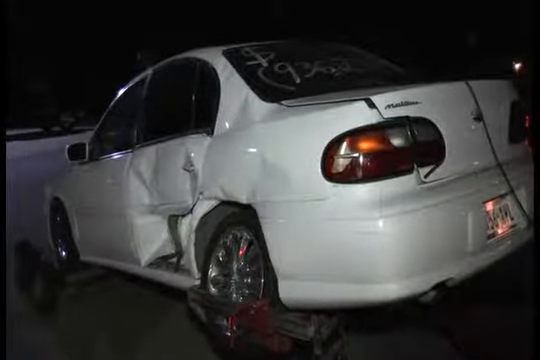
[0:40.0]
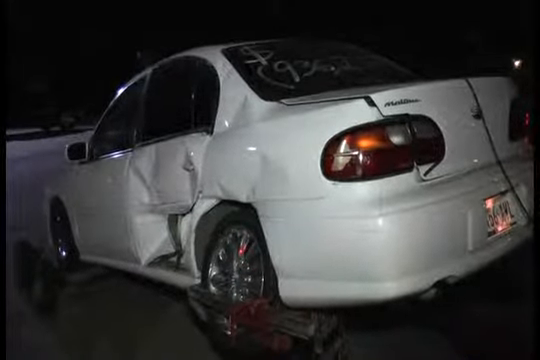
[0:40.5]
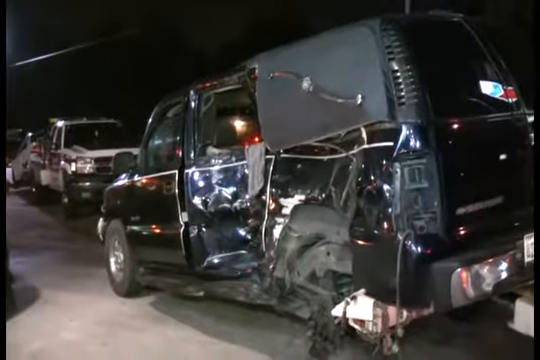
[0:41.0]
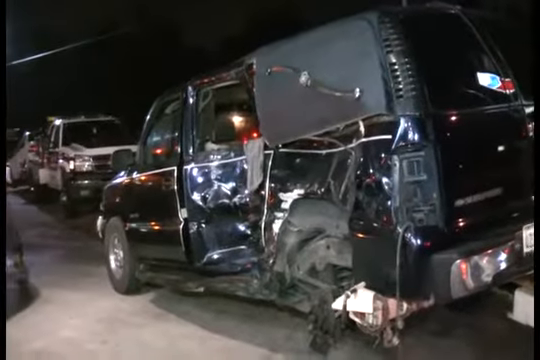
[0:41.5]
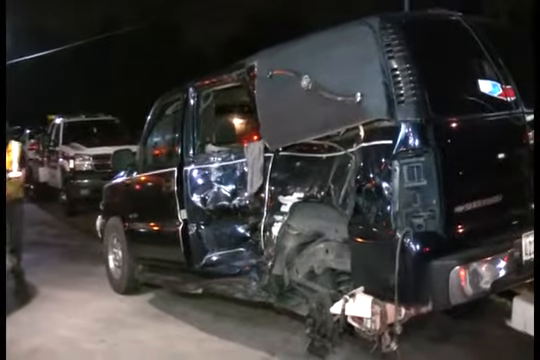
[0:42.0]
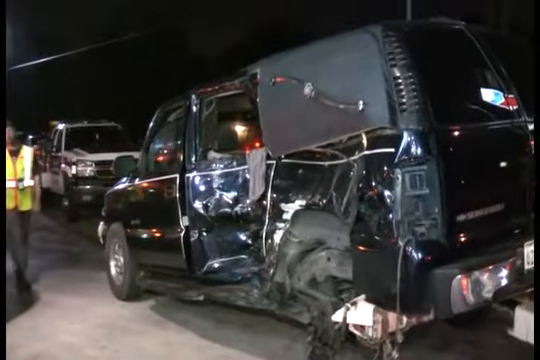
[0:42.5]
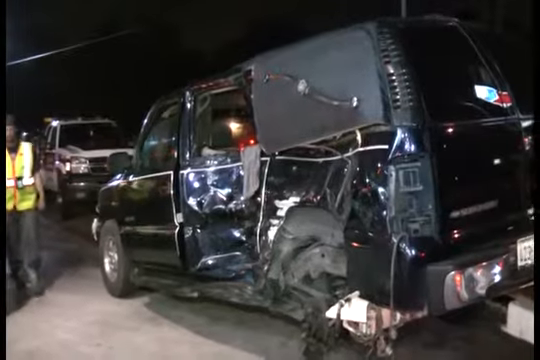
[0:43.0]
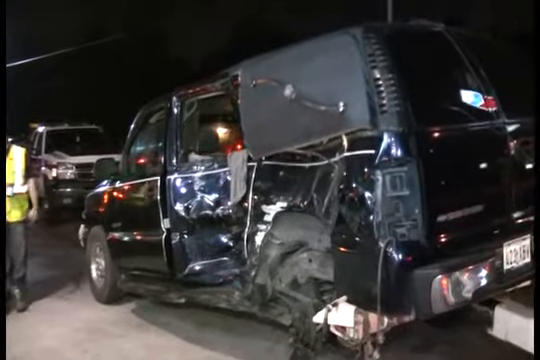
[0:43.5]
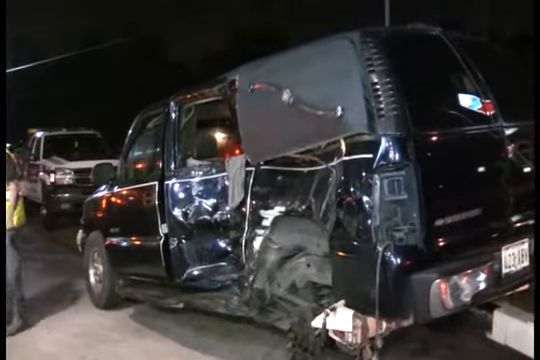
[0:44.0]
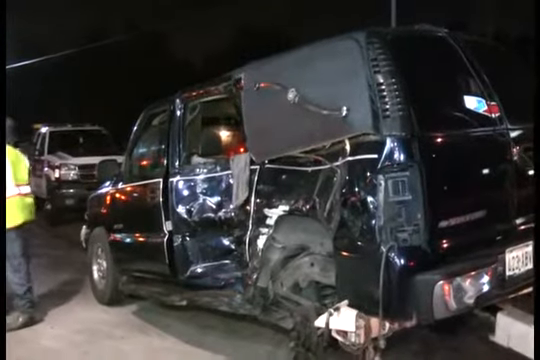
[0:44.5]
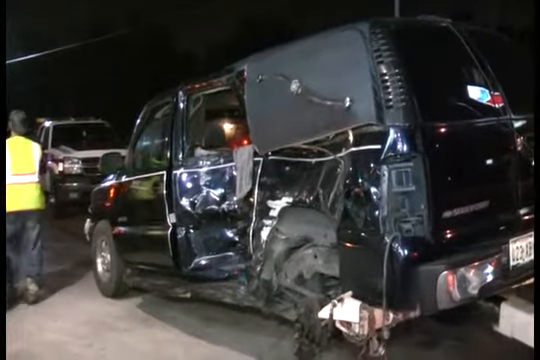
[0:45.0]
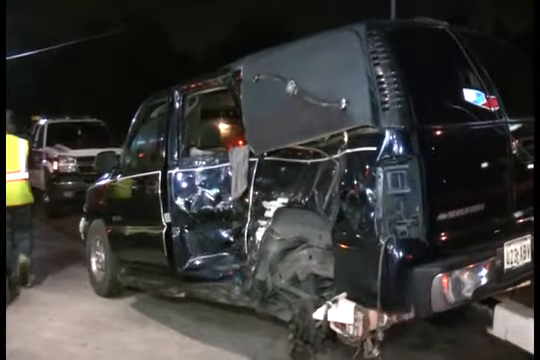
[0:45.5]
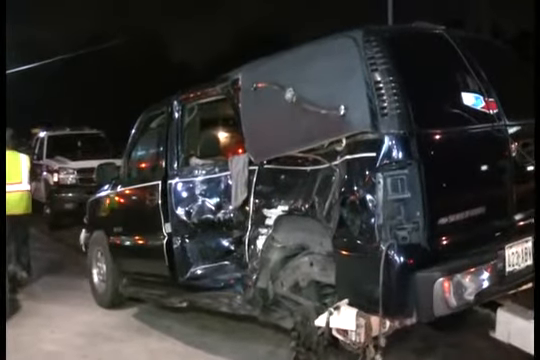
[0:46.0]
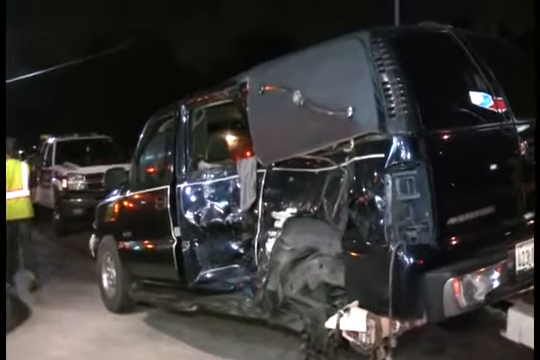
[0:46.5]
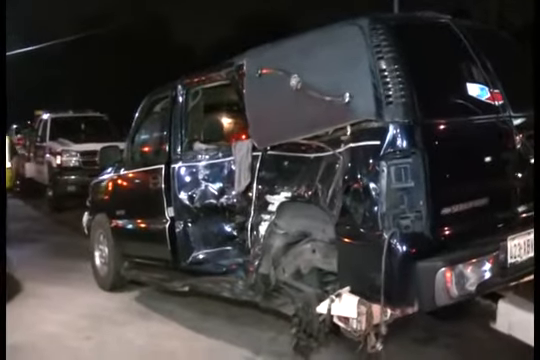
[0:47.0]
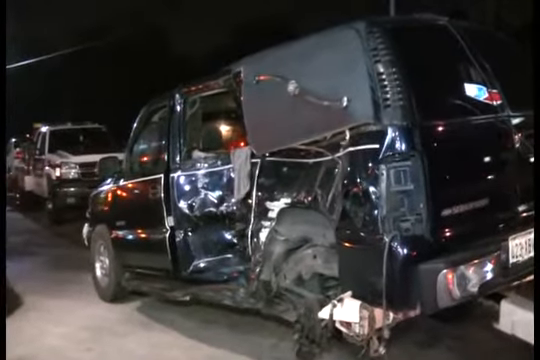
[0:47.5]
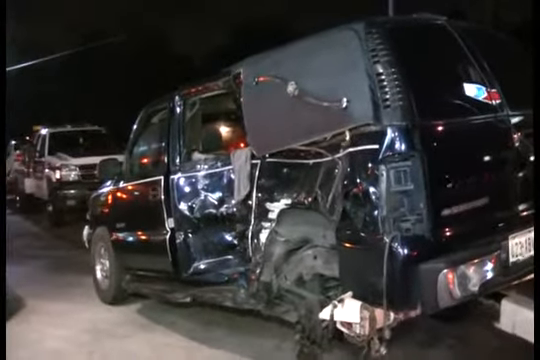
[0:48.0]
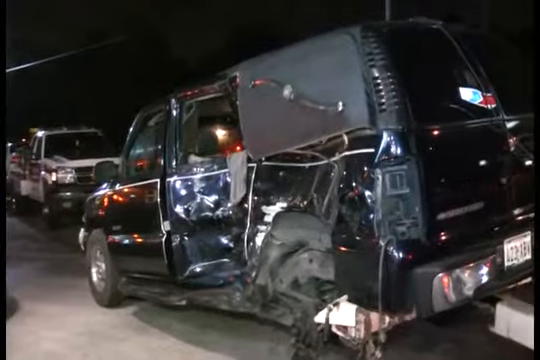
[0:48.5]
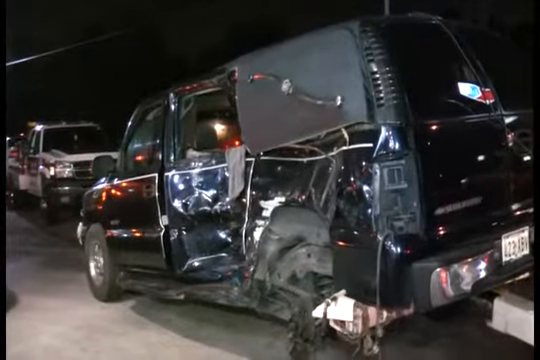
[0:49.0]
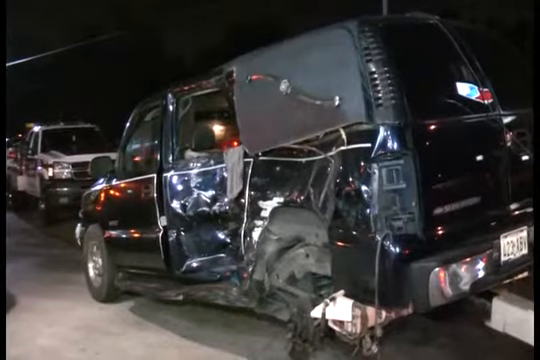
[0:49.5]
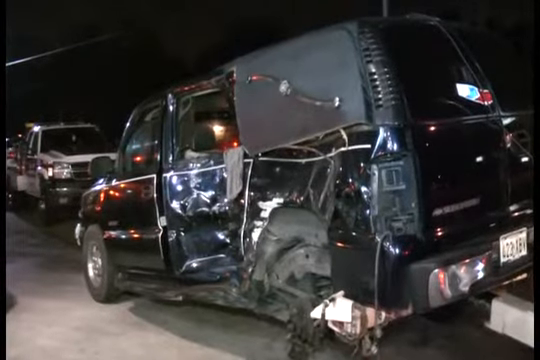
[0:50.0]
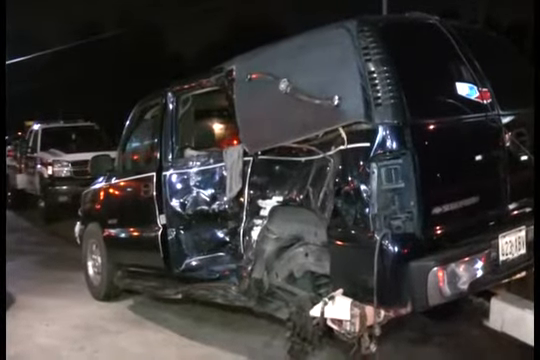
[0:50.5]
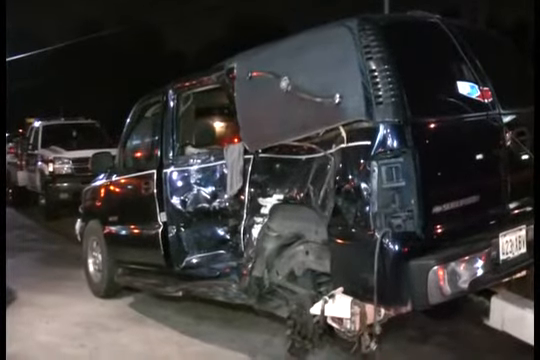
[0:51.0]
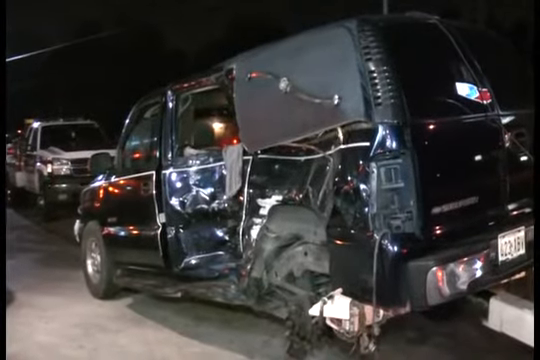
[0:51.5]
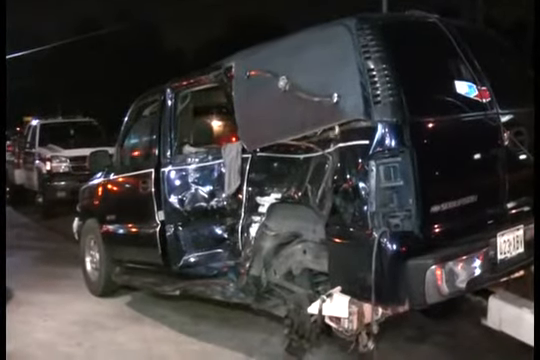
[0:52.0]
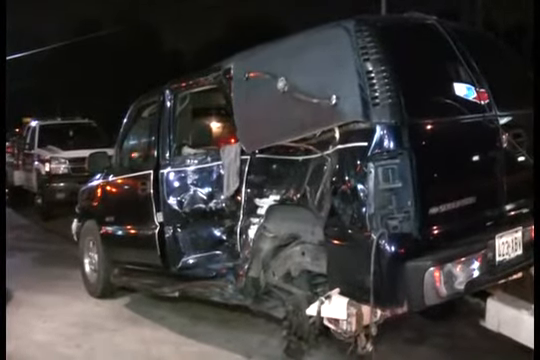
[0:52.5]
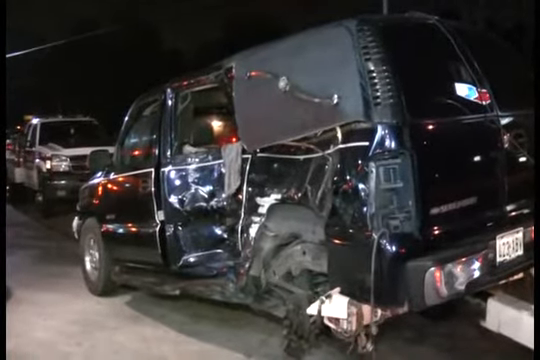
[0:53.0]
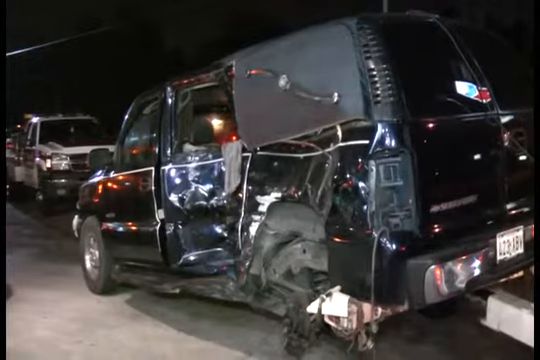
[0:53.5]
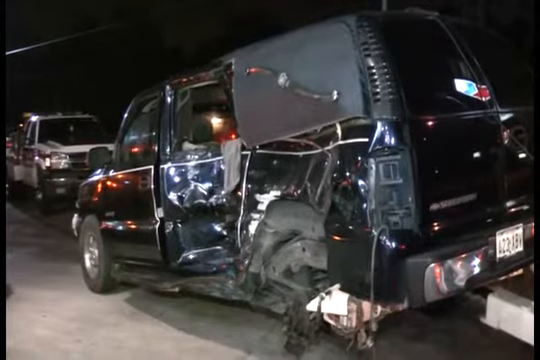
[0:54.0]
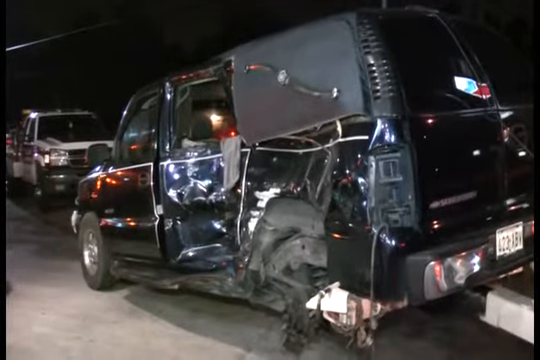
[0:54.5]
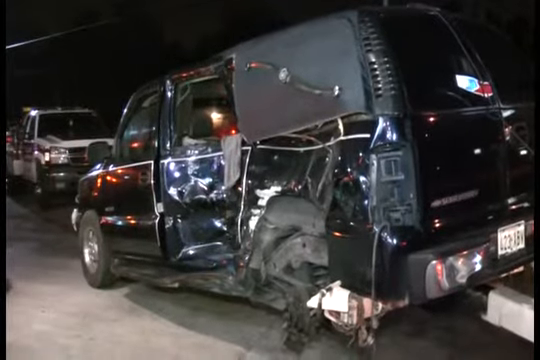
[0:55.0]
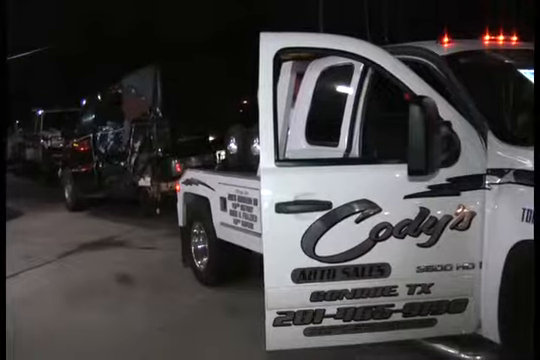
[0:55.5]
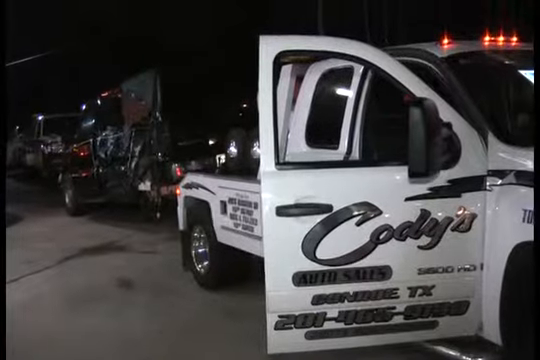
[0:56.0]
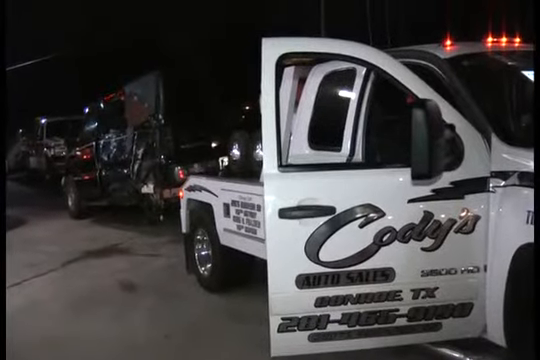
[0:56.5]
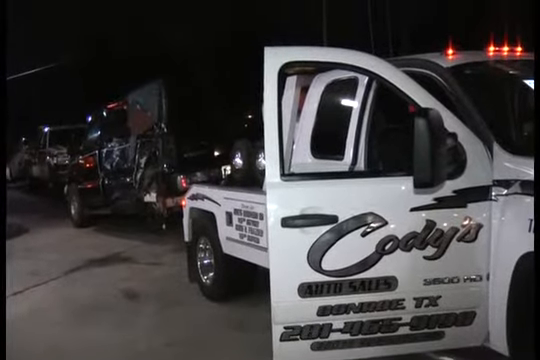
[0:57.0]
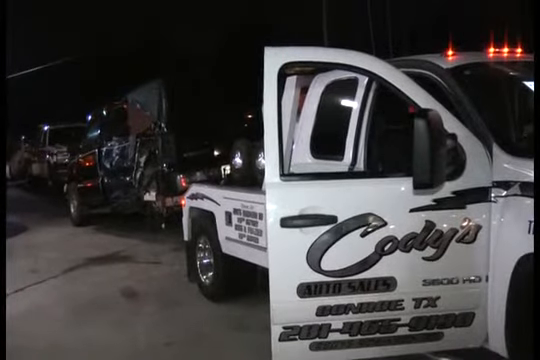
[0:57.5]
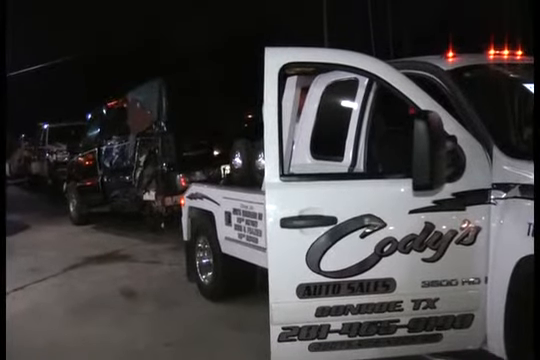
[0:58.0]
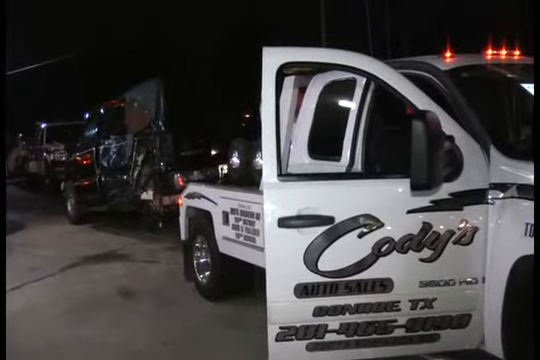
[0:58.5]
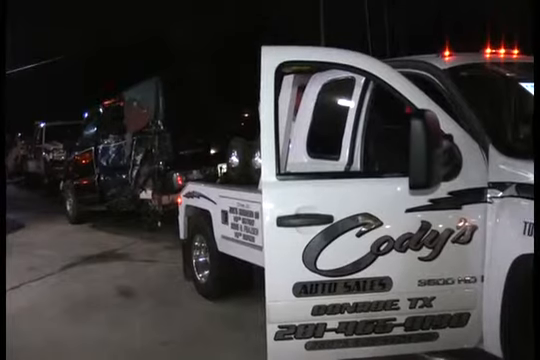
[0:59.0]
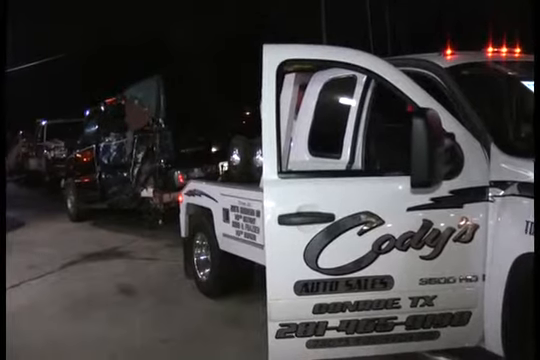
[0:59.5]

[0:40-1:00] The footage is taken at night. A white car is seen from the rear; its back left door is smashed in, the number plate at the back is not clearly visible, and the car's lights are off. The video cuts to another vehicle, black and severely dented, with its back left wheel missing. Its number plate is blurry, and lights from the surroundings are reflected on its shiny surface. The vehicle is seen from the rear. In front of it is a white truck, parked facing the black vehicle. On the left side of the frame a man appears, wearing a green reflector jacket and a black t-shirt. He walks toward the camera, stops, turns around and walks back in the direction he came from, disappearing from frame.